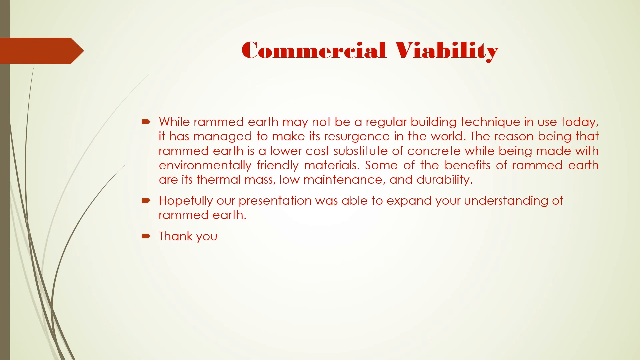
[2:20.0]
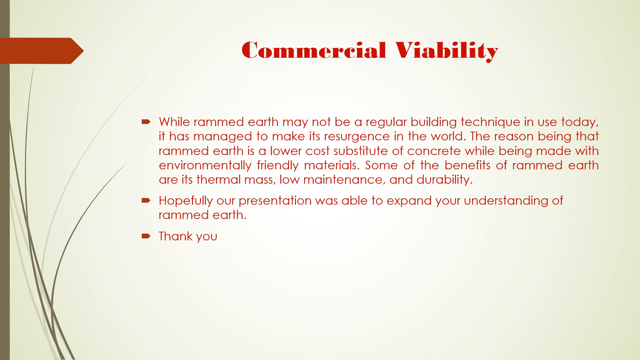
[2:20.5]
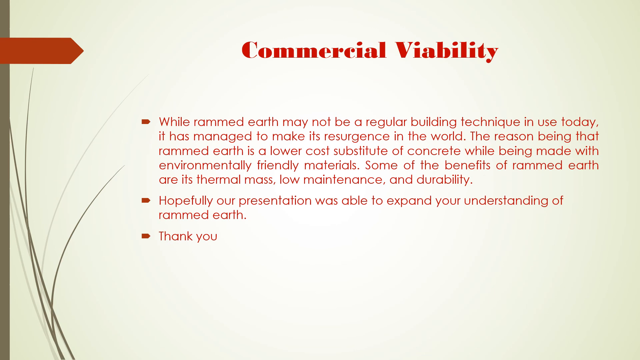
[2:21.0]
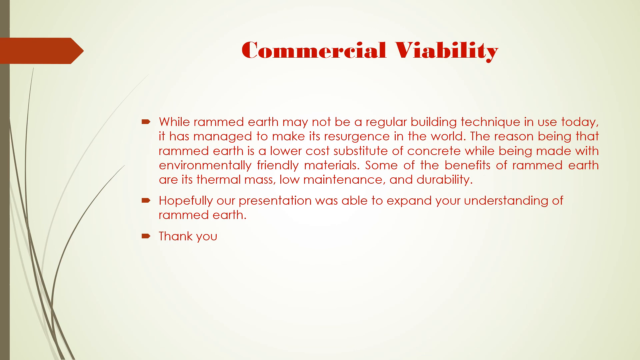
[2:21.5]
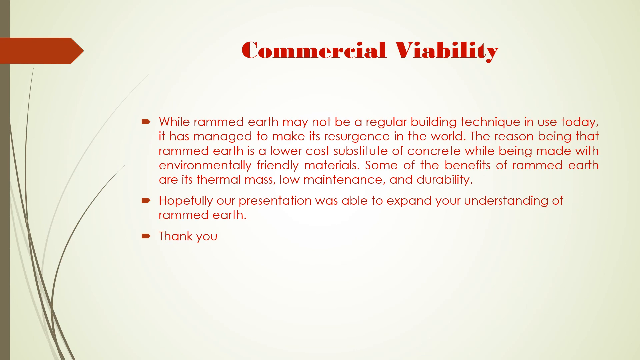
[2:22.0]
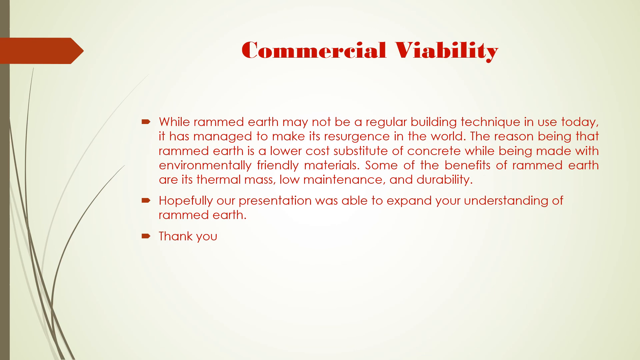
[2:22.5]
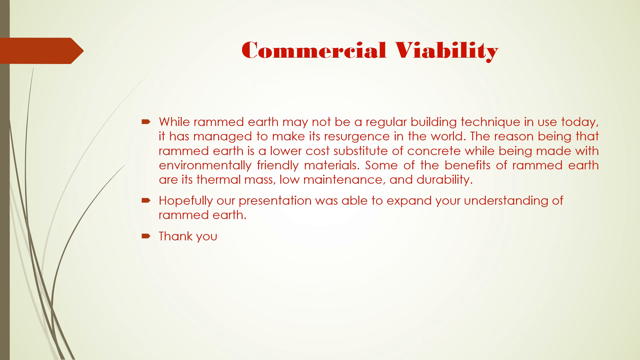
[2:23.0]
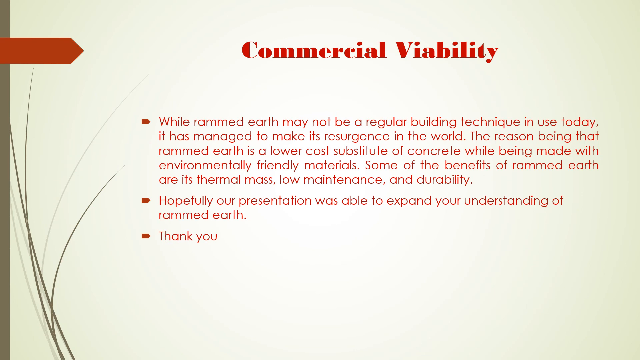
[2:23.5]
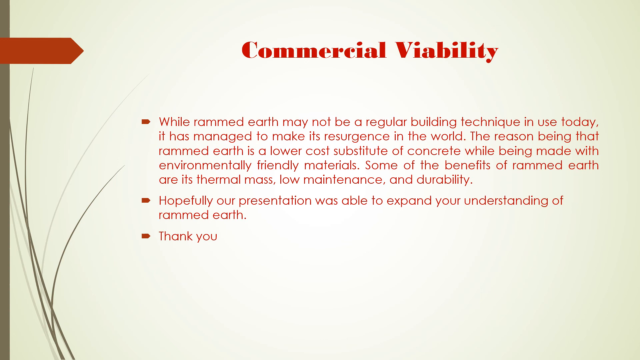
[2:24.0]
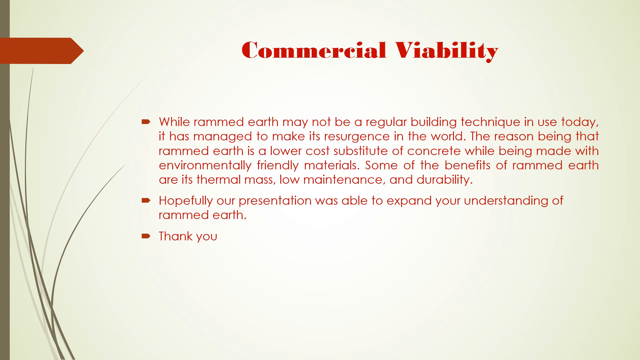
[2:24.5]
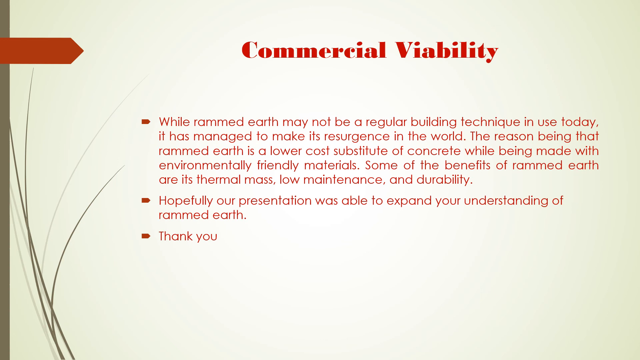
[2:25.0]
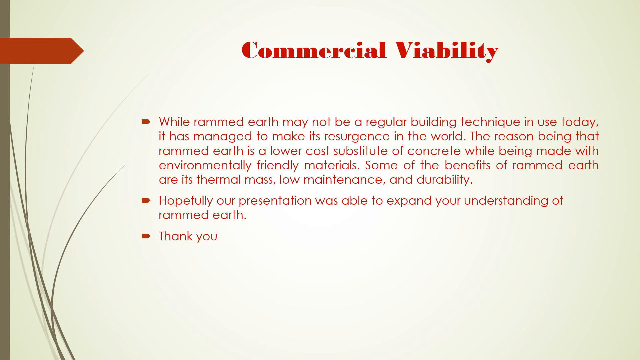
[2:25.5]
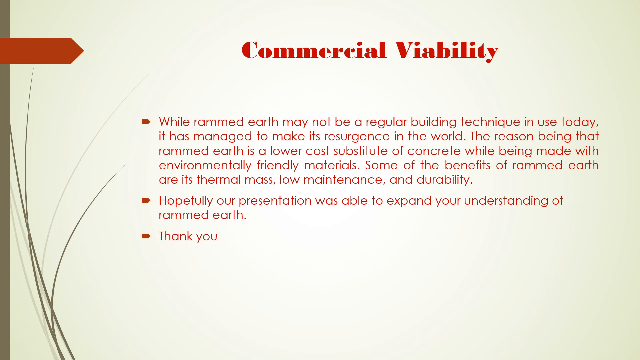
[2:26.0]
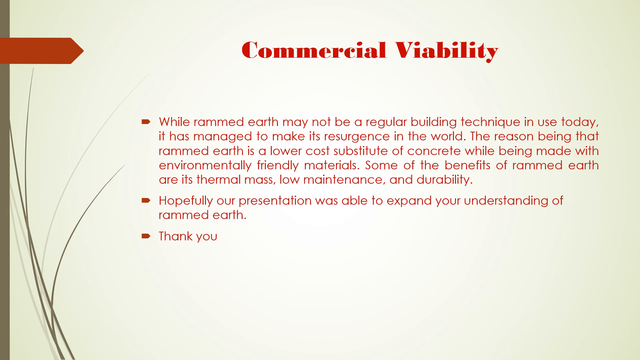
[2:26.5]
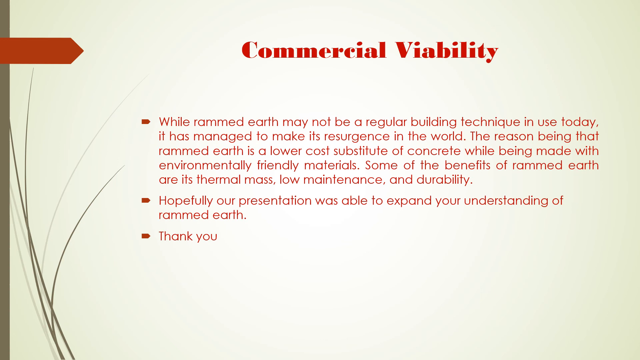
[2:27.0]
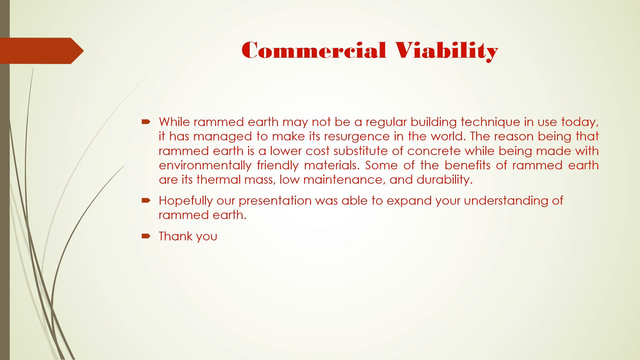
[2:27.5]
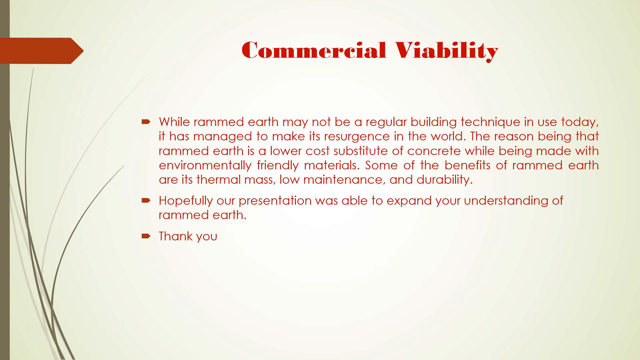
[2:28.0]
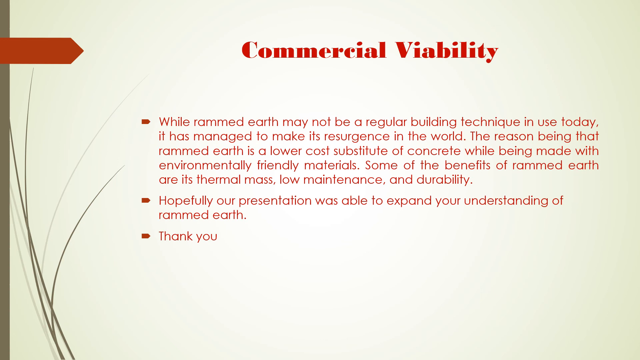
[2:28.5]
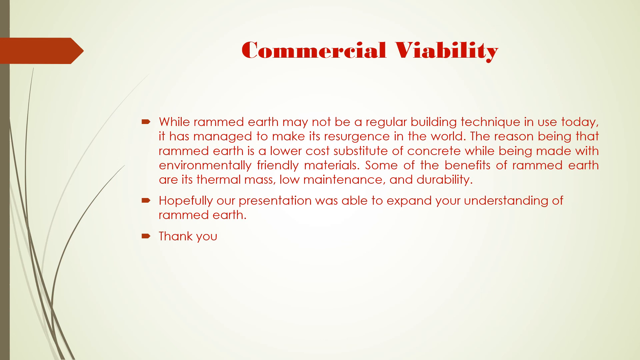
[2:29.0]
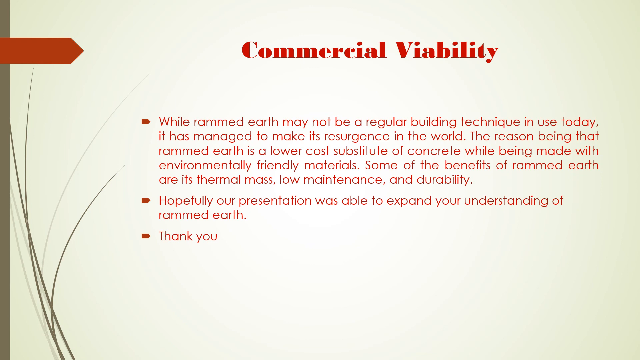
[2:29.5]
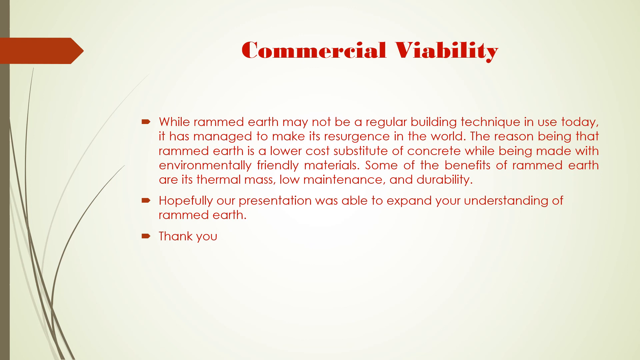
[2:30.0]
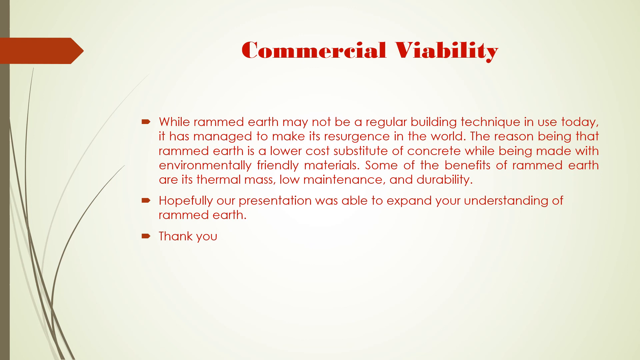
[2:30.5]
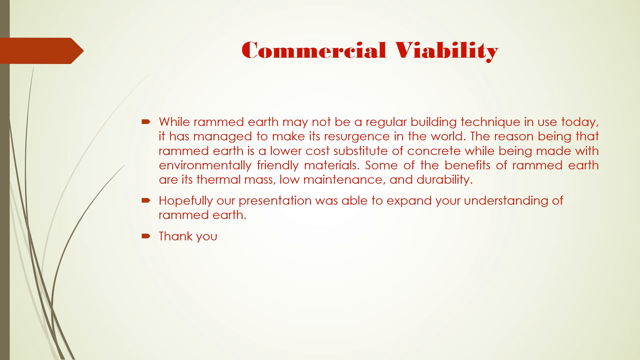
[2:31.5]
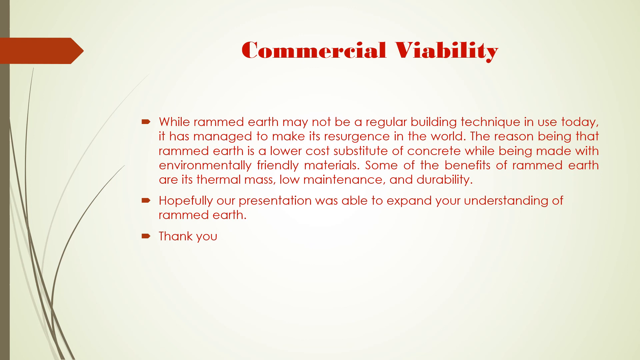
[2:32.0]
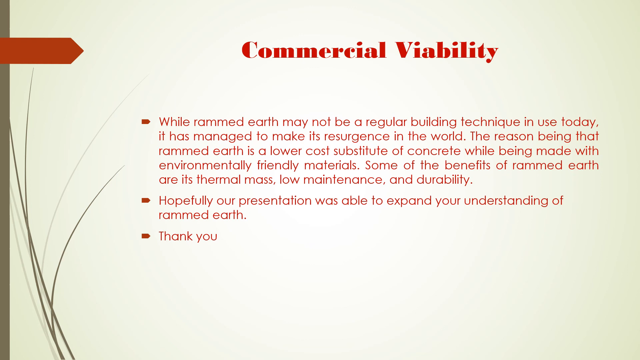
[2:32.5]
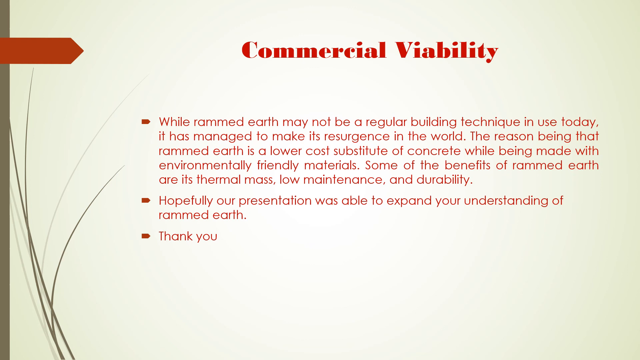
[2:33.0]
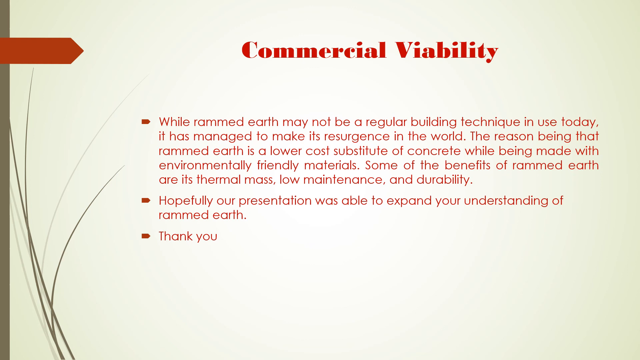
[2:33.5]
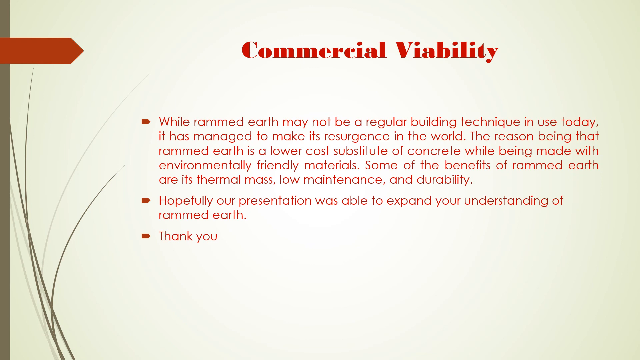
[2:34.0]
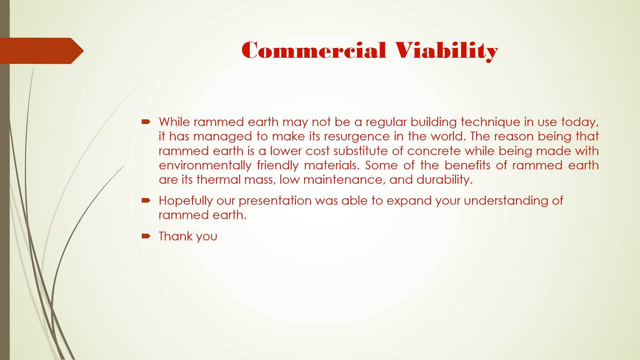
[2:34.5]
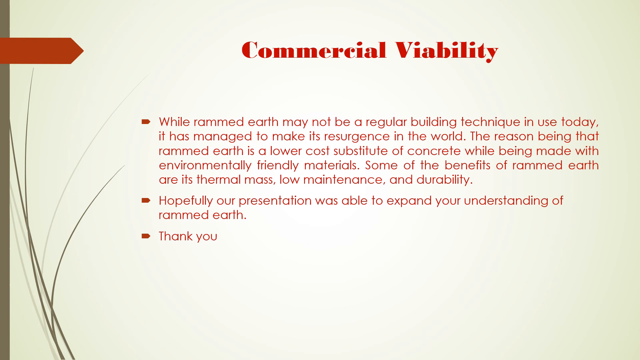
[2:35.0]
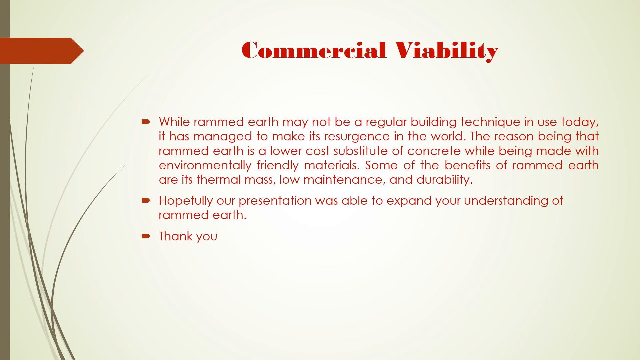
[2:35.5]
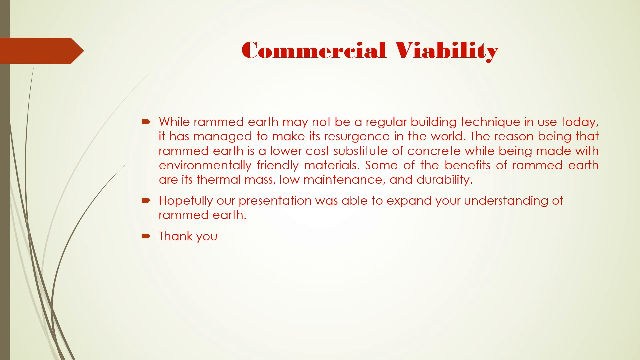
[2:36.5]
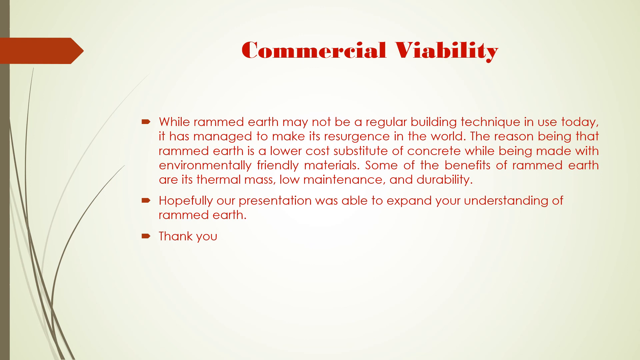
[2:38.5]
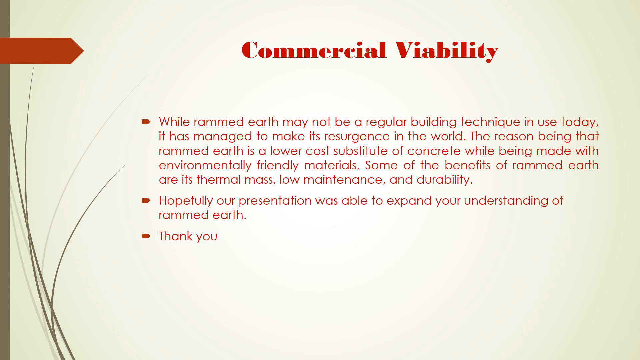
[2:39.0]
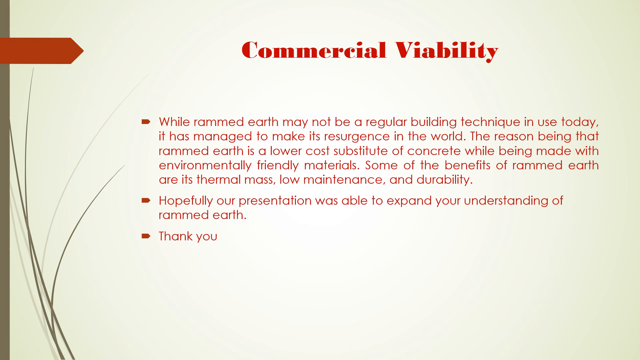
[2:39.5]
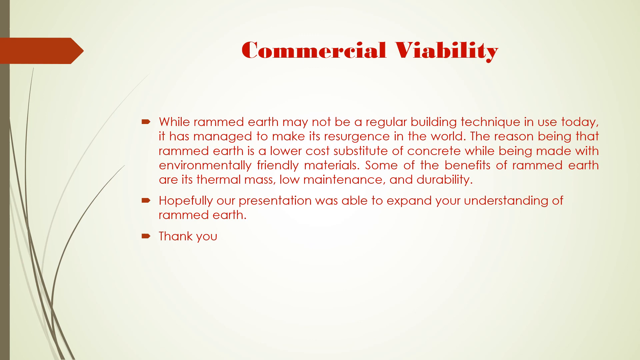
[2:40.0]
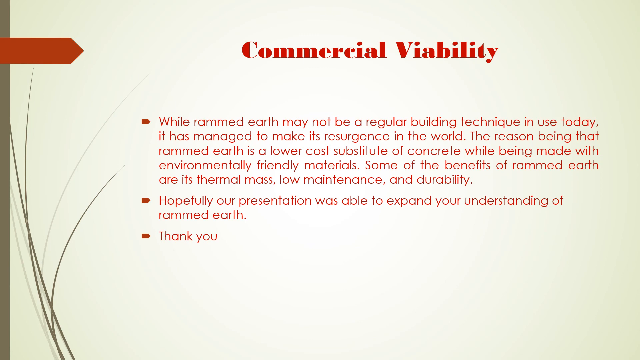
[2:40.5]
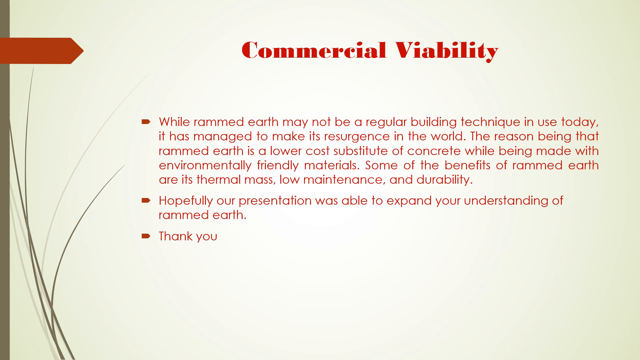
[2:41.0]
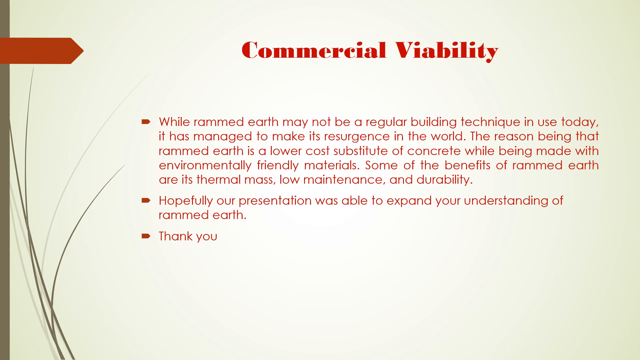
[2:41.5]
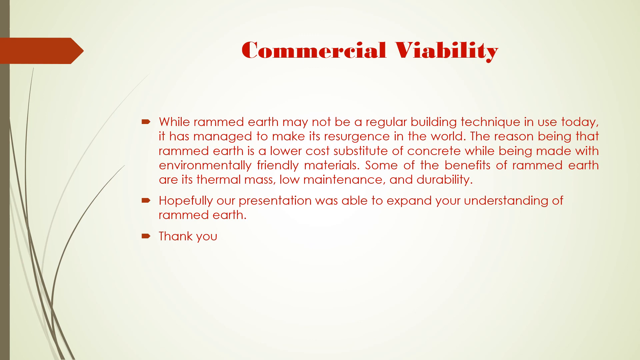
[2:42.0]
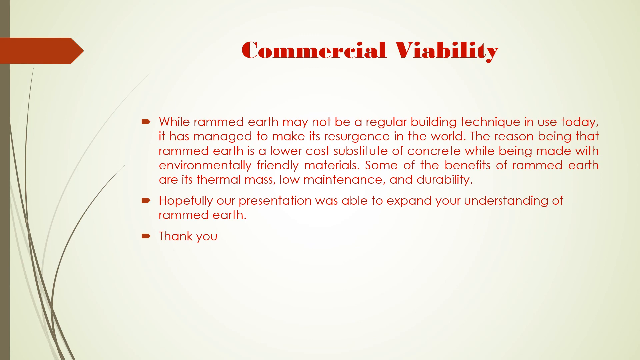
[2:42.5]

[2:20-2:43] A slide has the text "commercial viability" in bold red at the top of the screen, with three bullet points below. The first reads "while rammed earth may not be a regular building technique in use today, it has managed to make its resurgence in the world. The reason being that rammed earth is a lower cost substitute of concrete while being made with environmentally friendly materials. Some of the benefits of rammed earth are its thermal mass, low maintenance, and durability." The second reads "hopefully our presentation was able to expand your understanding of rammed earth," and the third says "thank you." All three bullet points are in a dark orange or light red color, with arrows instead of normal circle bullets next to each body of text. There is a red arrow in the top left-hand corner of the slide, a green border on the left side, and a few pieces of grass on the slide, some dark green and some light green. The video then finishes.